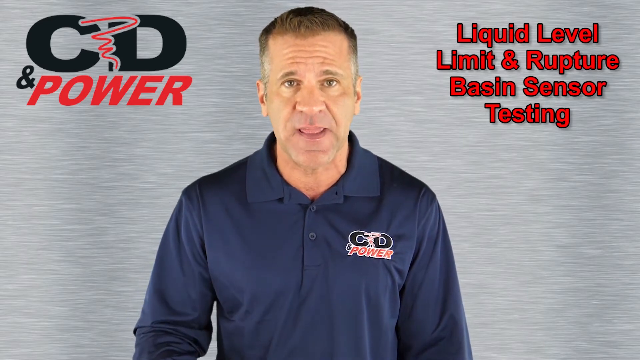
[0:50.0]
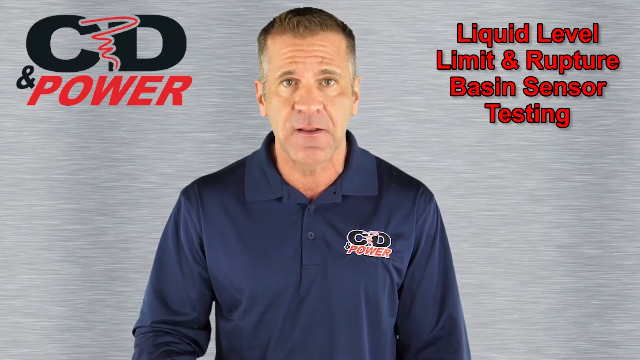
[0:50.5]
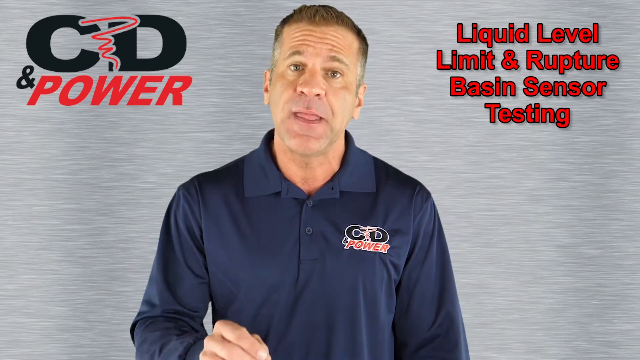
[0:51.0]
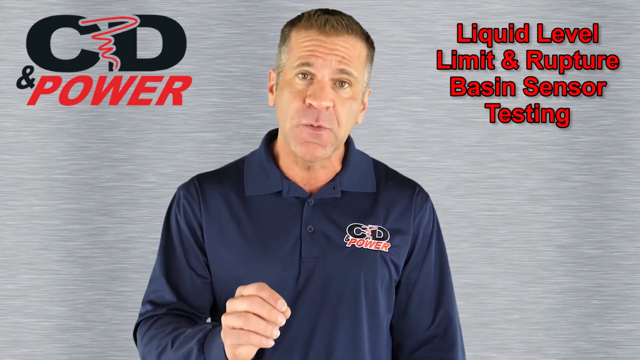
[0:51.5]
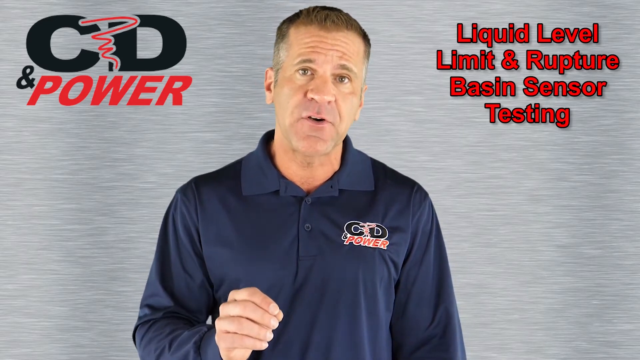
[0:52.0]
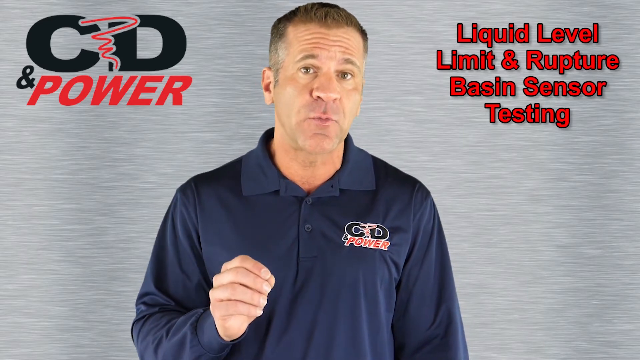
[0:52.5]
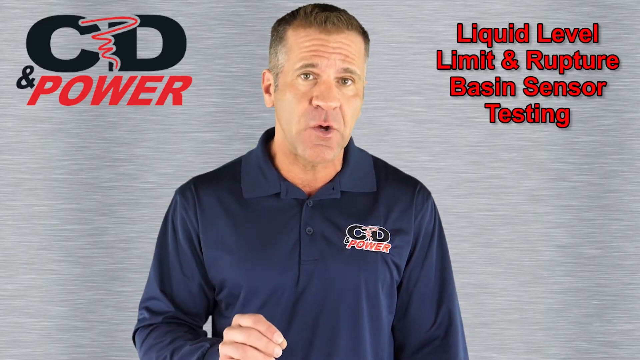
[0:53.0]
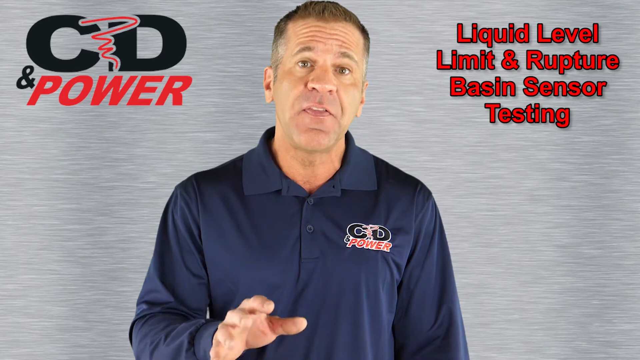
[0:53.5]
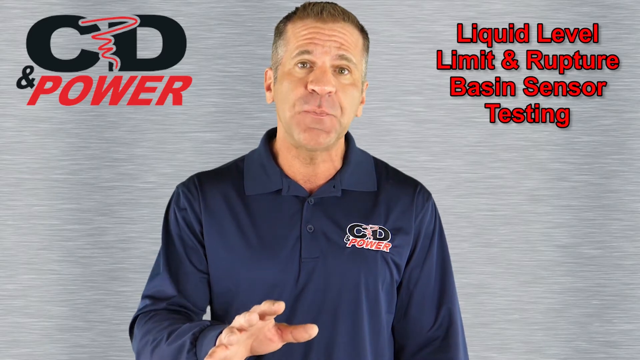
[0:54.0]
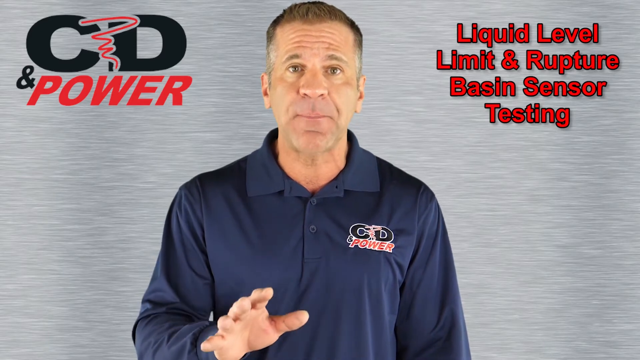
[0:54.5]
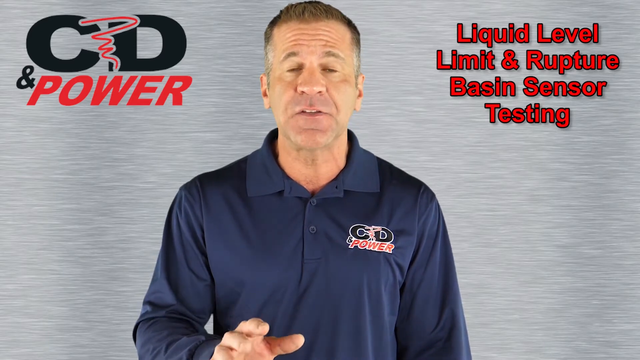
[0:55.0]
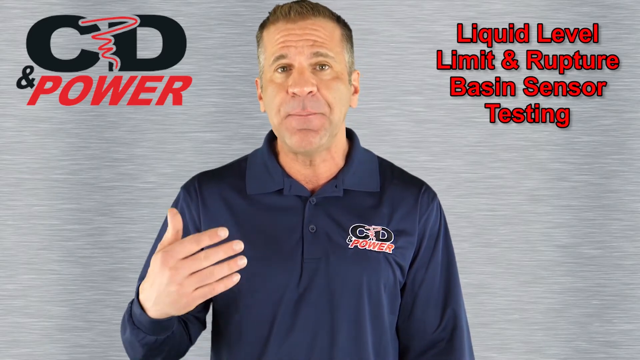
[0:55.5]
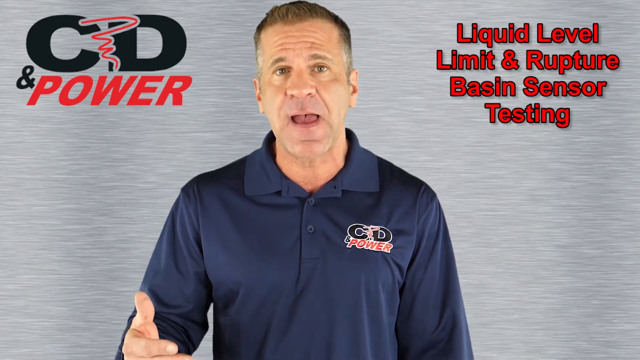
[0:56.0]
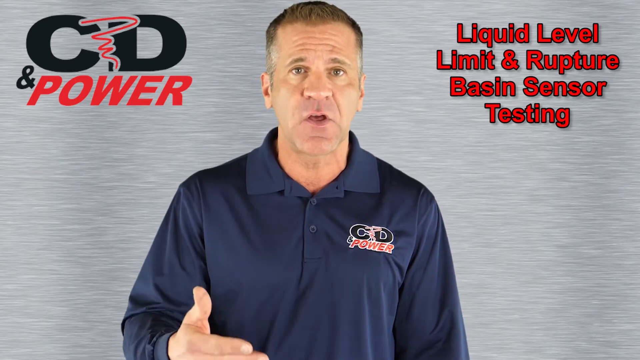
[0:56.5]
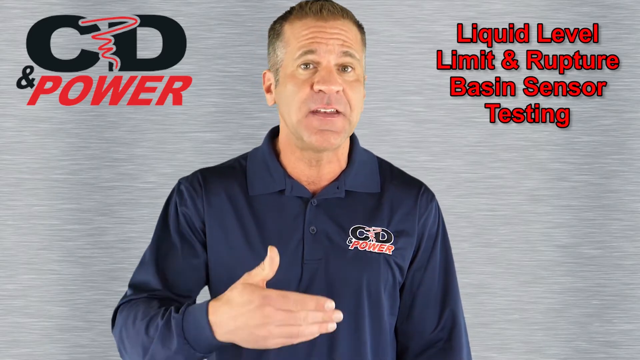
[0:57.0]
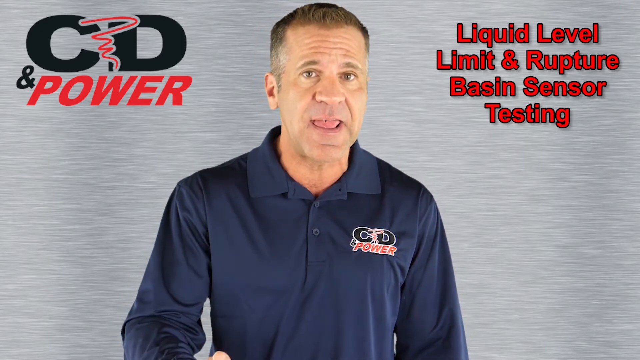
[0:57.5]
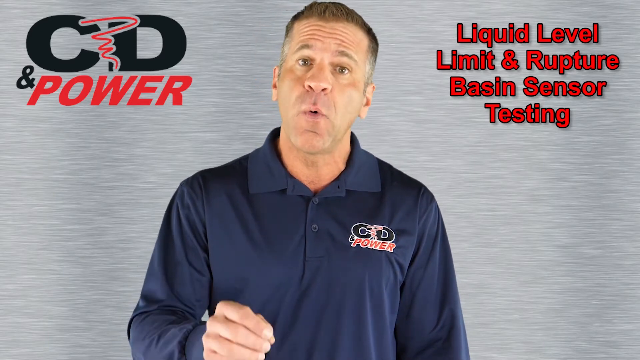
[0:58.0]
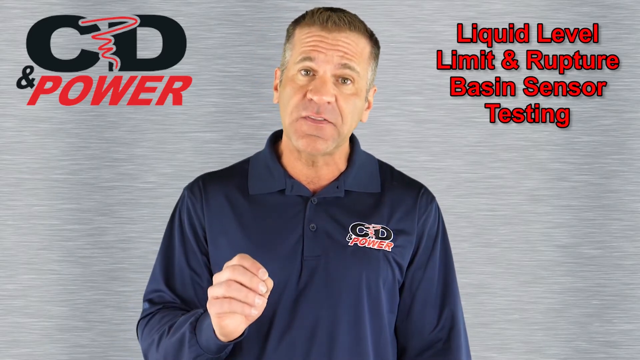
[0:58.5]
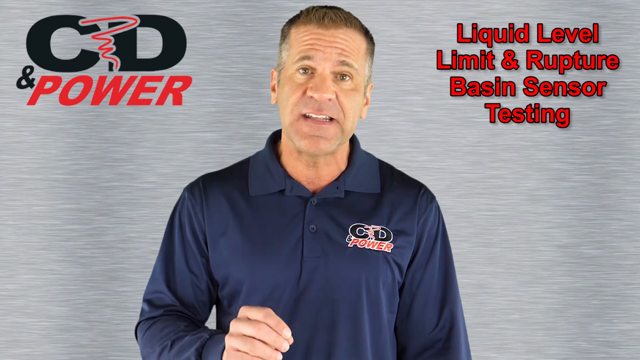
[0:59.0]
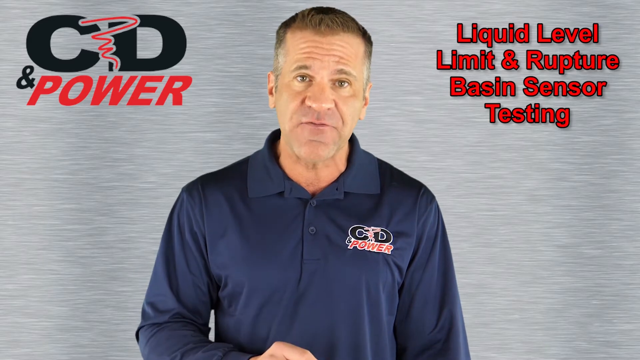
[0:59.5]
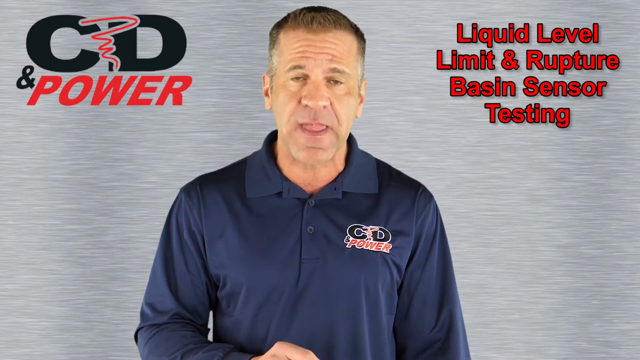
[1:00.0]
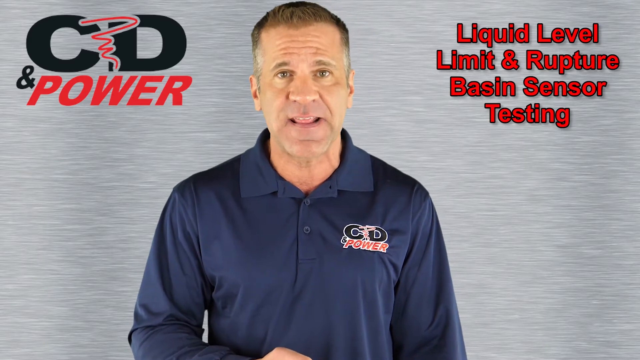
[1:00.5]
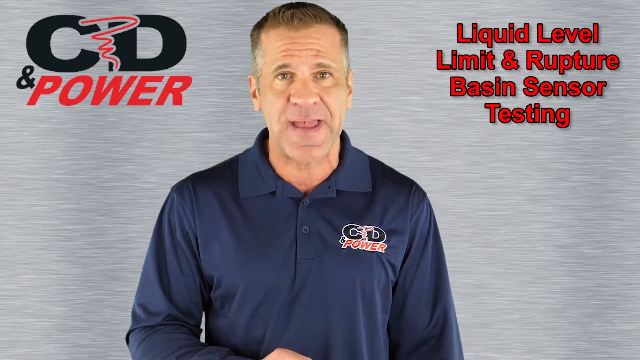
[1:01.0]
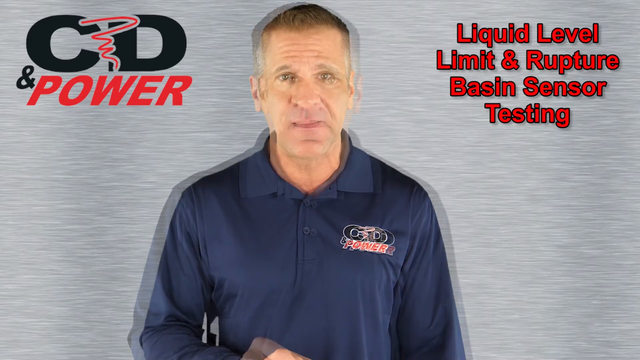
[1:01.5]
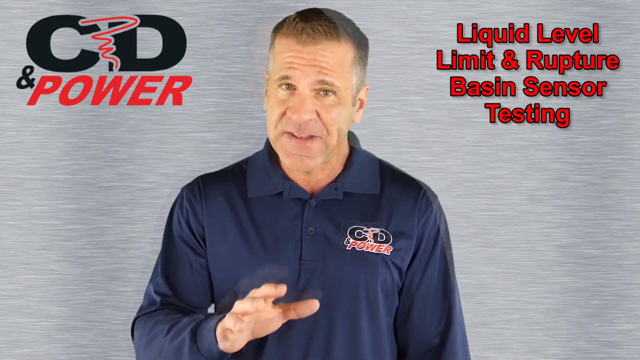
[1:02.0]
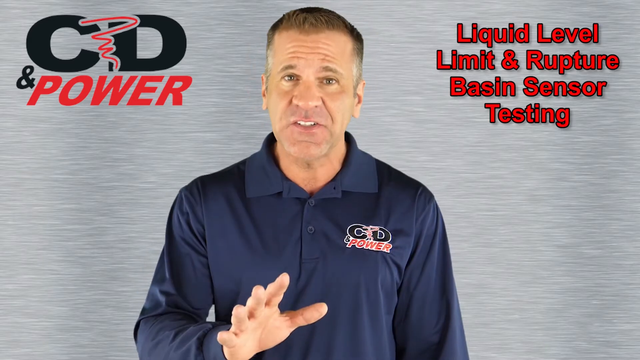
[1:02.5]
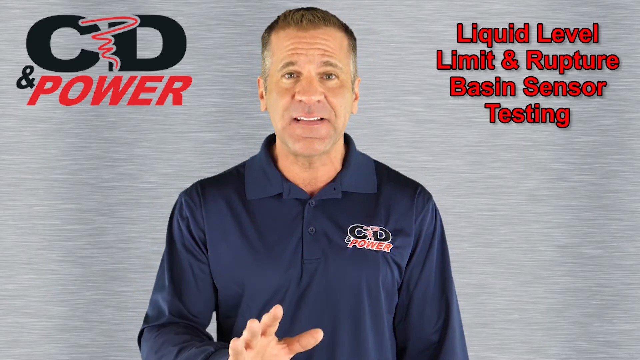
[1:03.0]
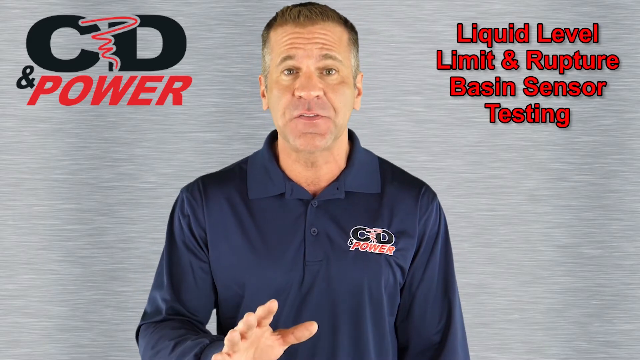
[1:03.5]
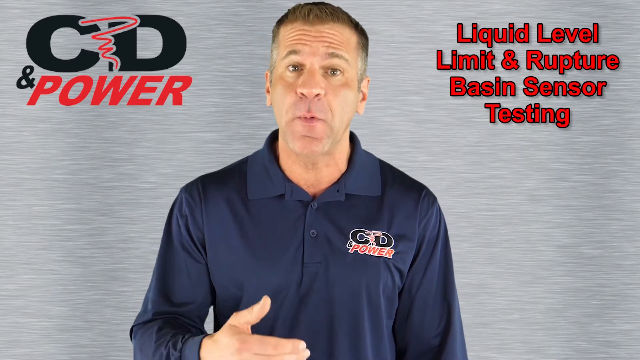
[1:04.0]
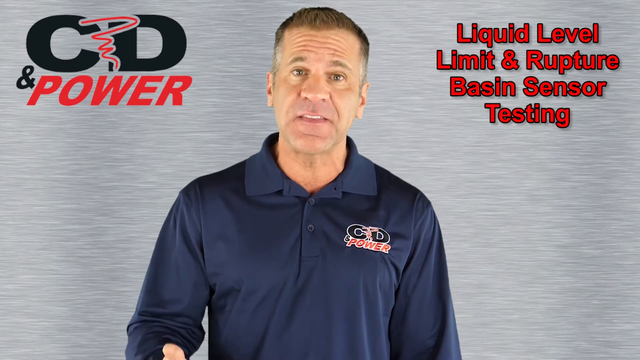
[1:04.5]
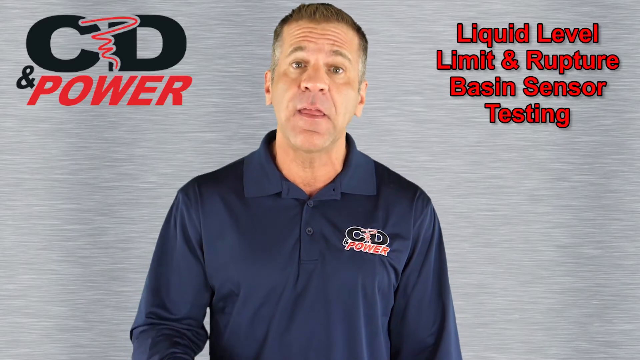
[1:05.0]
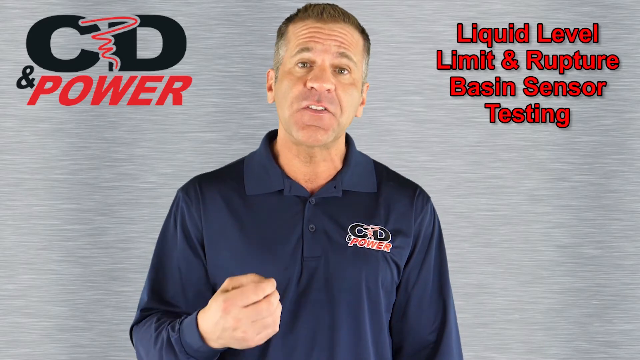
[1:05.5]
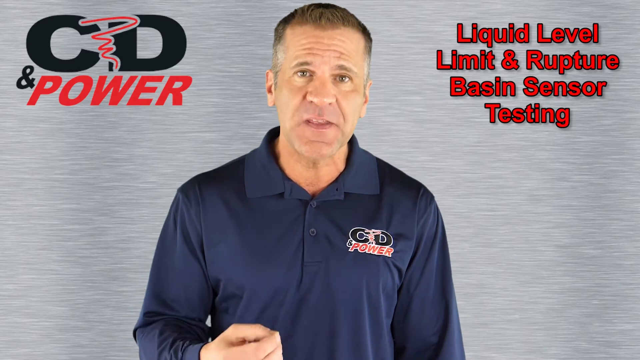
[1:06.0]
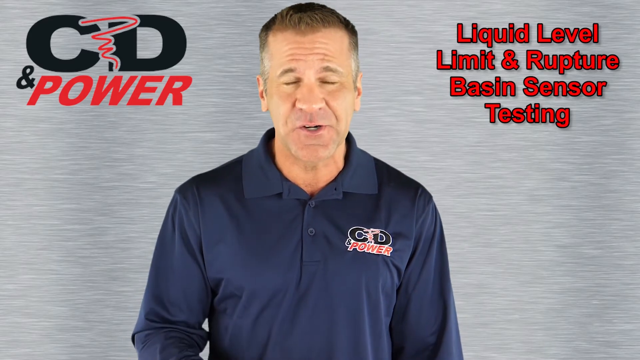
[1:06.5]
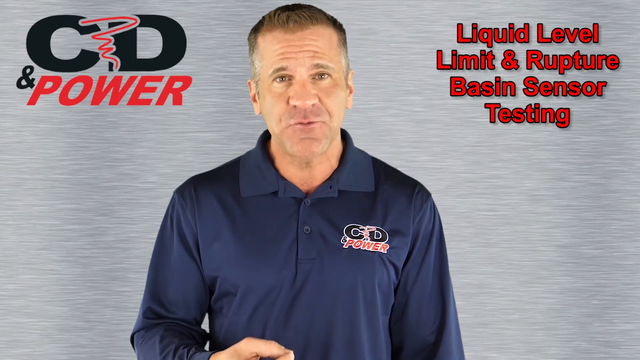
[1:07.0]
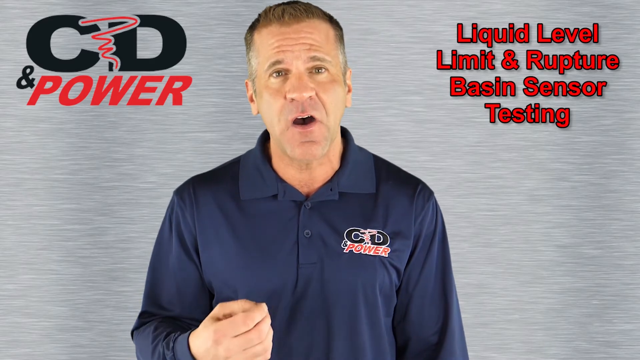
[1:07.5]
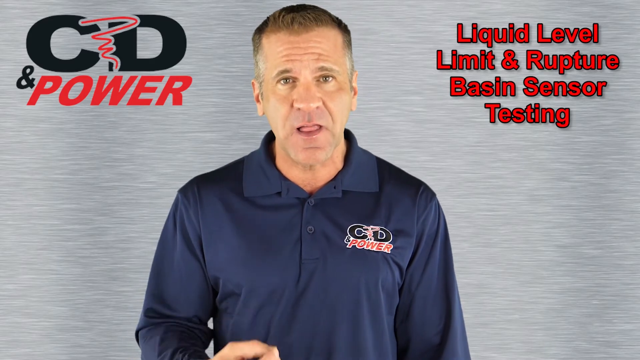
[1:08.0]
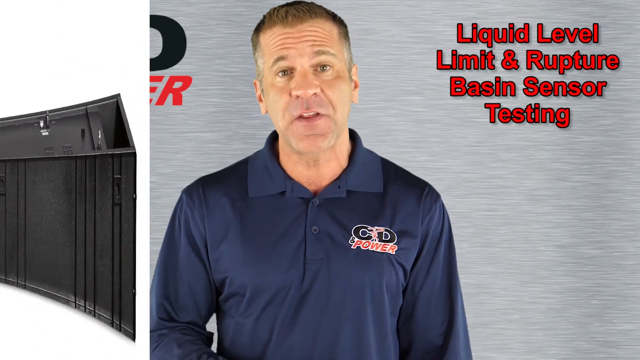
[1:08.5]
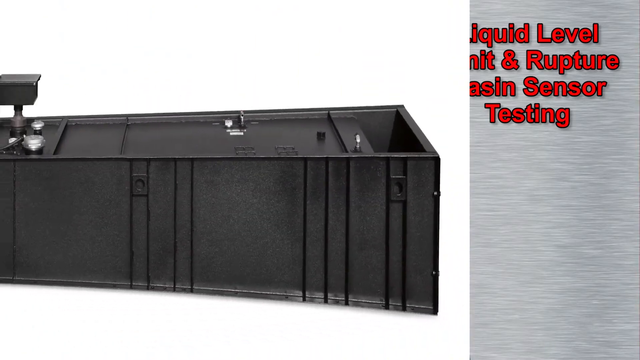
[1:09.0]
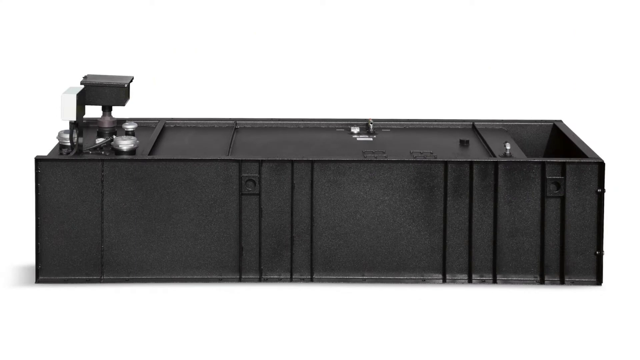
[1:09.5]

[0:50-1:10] The man keeps talking, looking directly at the viewer with a focused expression. Near the end, the video transitions to an image that comes in from the left, showing a giant black box that looks like the same long black box seen earlier, in a much clearer view. It almost looks like a kitchen counter, with a deep pit at the far right side and some sort of raised box on the far left; that box was previously shown with a lock on it.